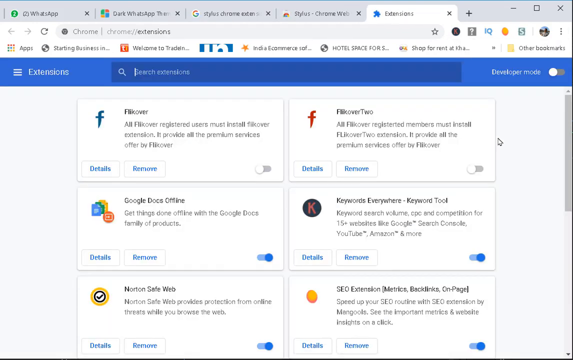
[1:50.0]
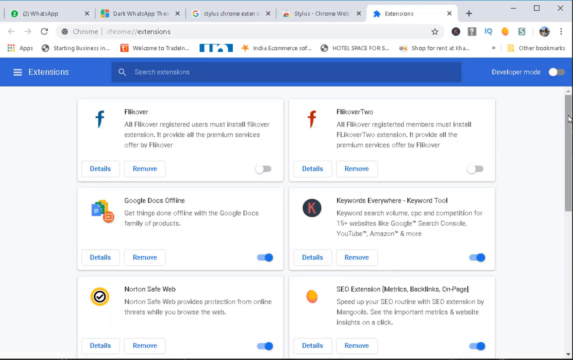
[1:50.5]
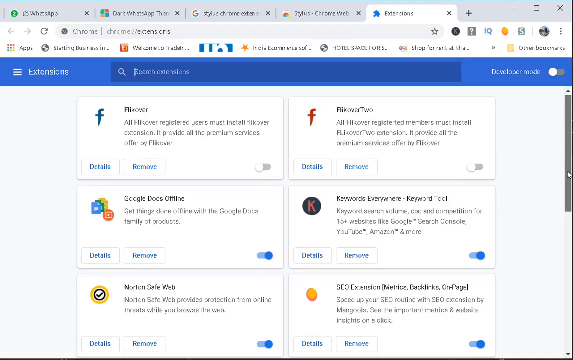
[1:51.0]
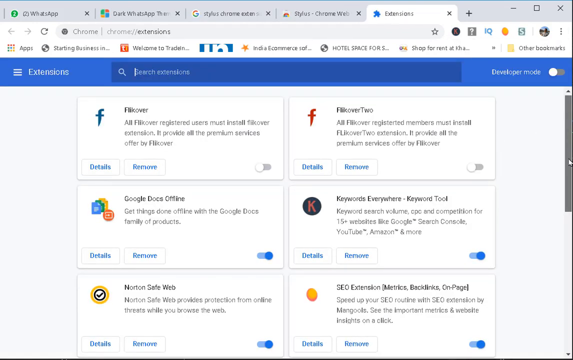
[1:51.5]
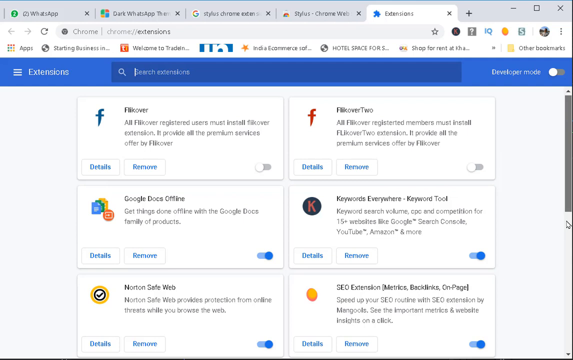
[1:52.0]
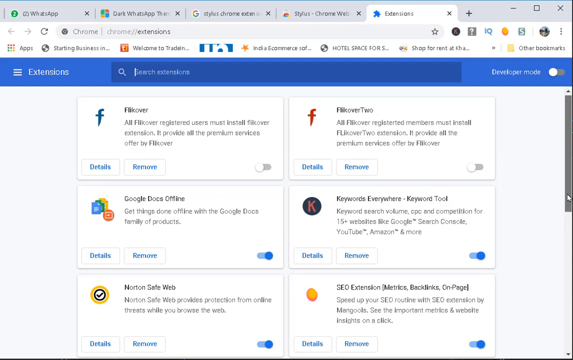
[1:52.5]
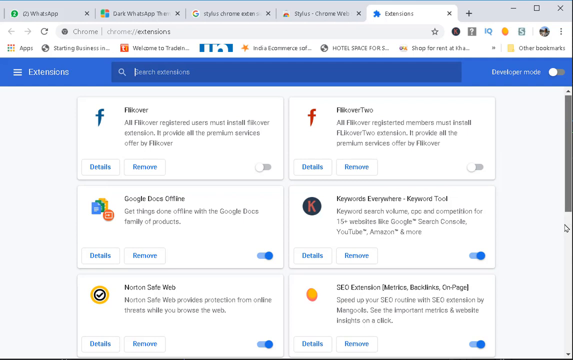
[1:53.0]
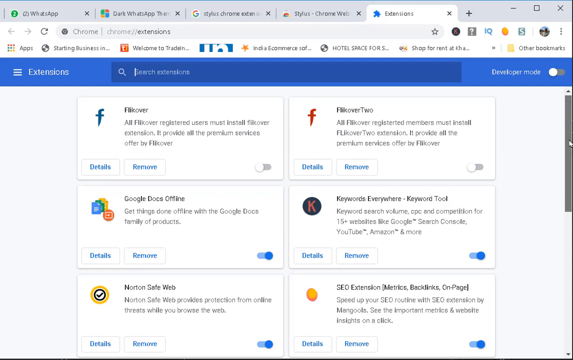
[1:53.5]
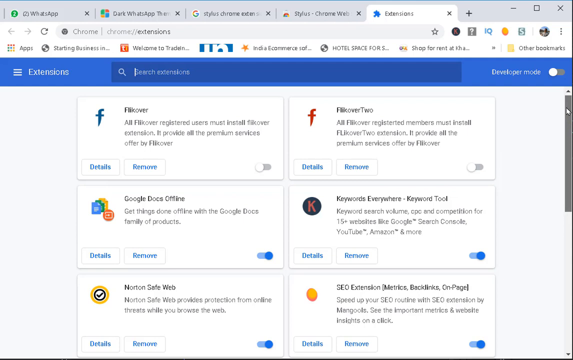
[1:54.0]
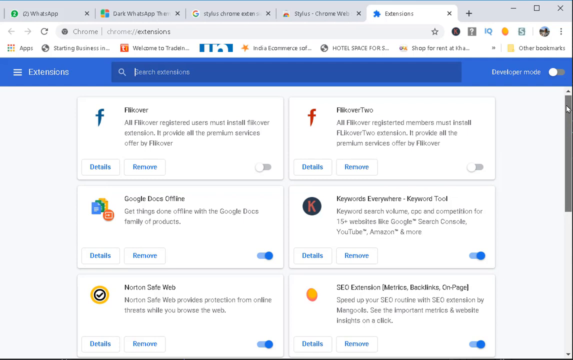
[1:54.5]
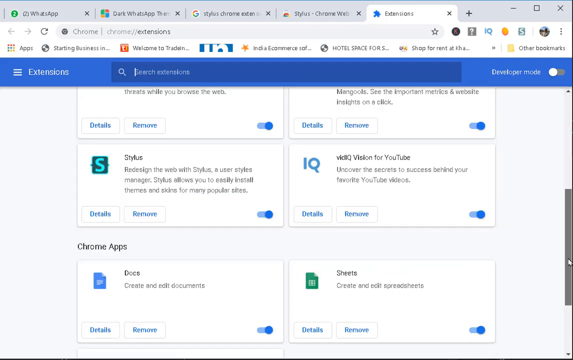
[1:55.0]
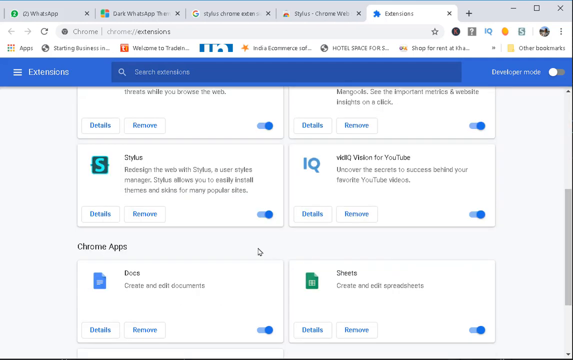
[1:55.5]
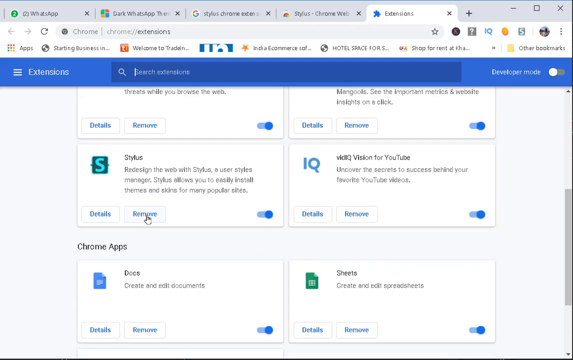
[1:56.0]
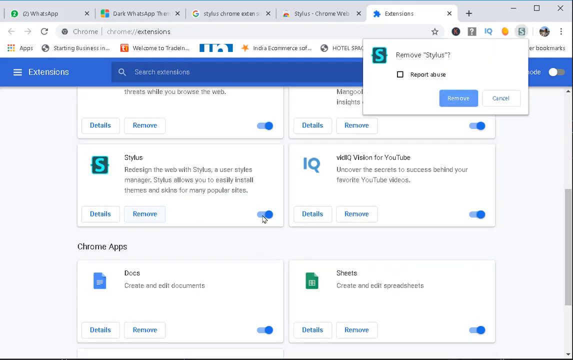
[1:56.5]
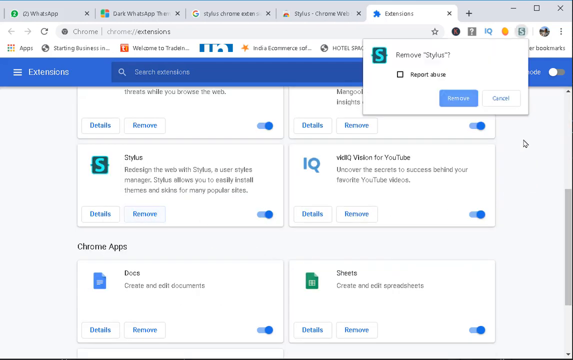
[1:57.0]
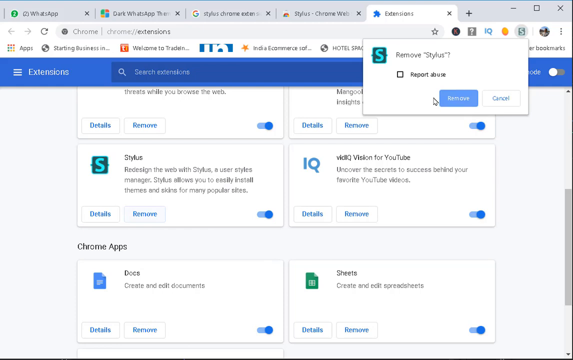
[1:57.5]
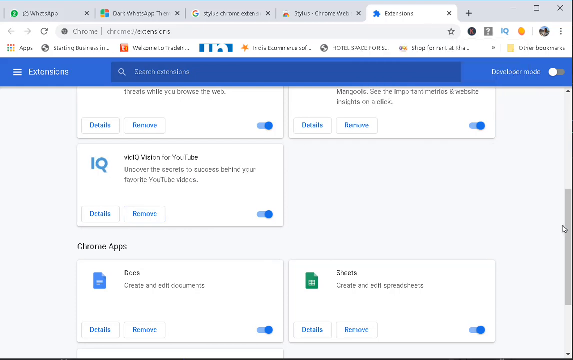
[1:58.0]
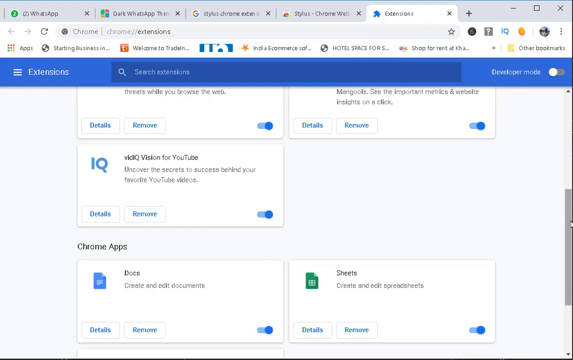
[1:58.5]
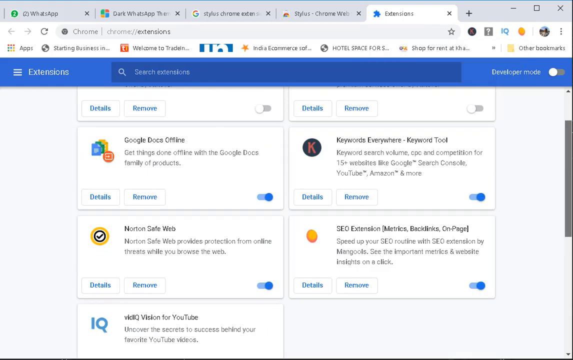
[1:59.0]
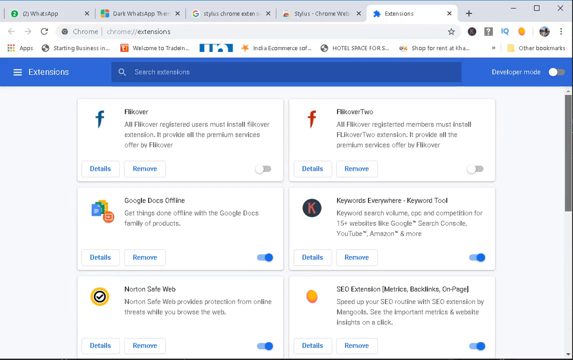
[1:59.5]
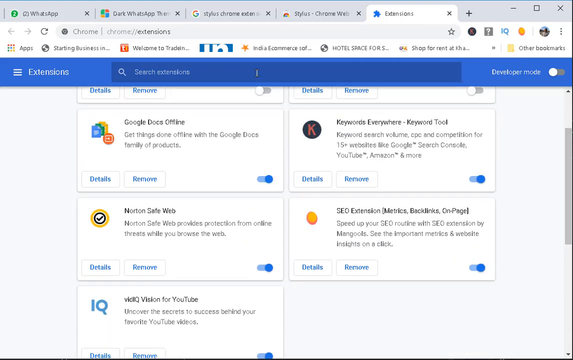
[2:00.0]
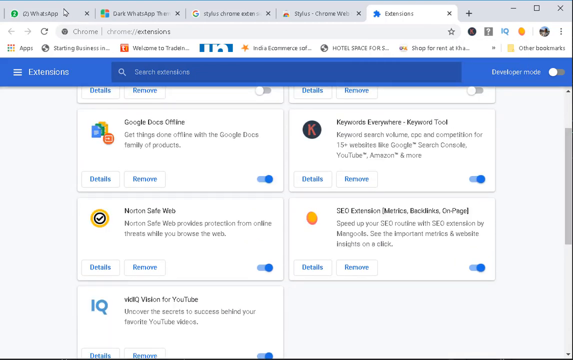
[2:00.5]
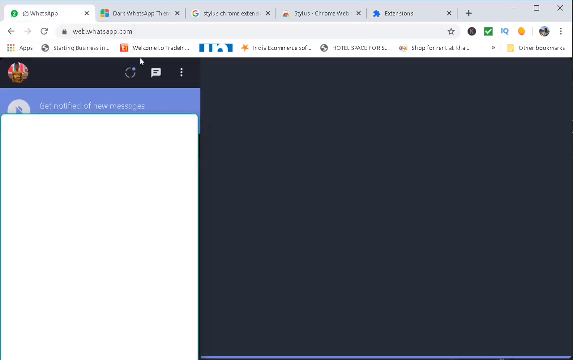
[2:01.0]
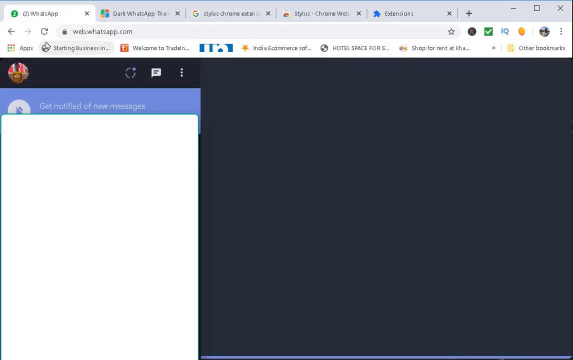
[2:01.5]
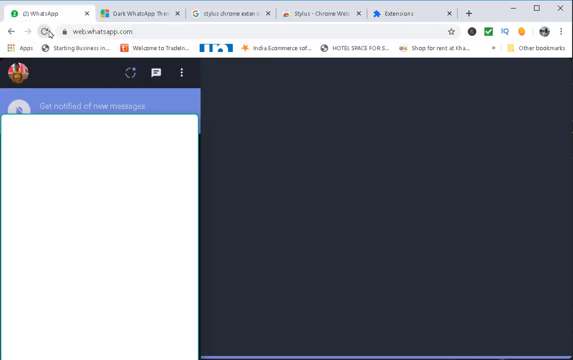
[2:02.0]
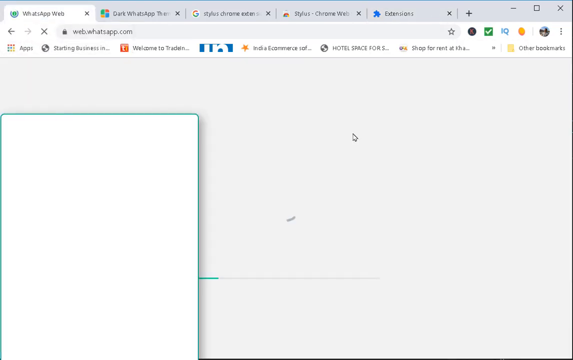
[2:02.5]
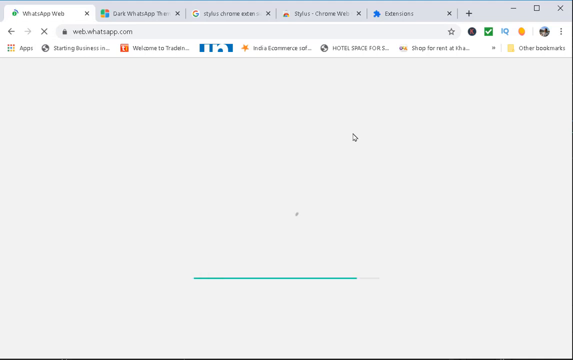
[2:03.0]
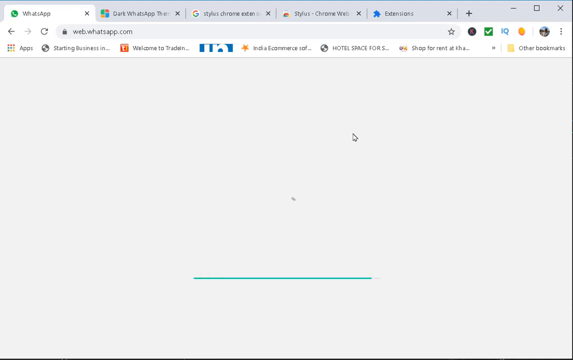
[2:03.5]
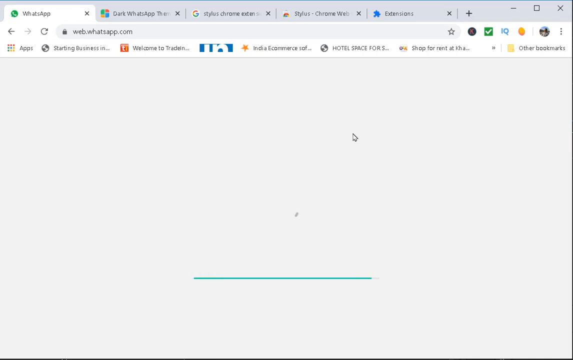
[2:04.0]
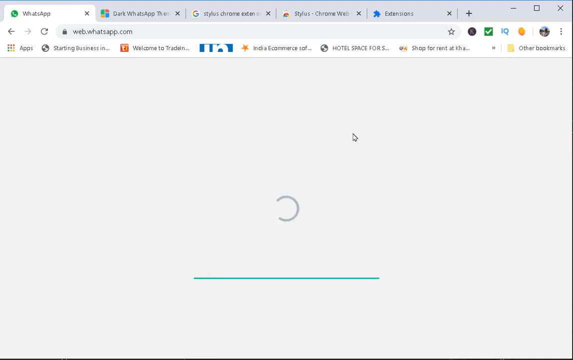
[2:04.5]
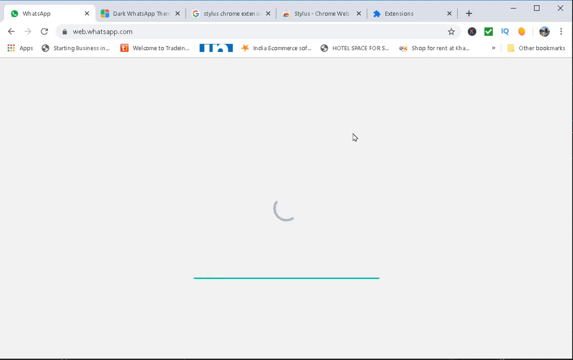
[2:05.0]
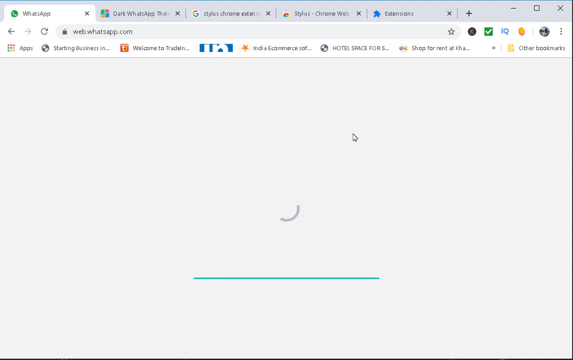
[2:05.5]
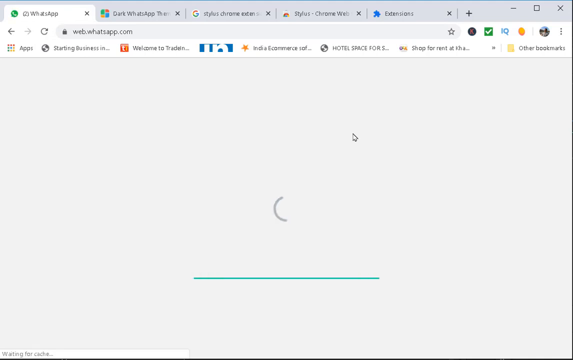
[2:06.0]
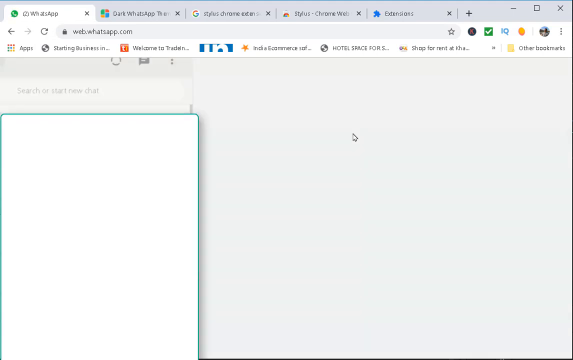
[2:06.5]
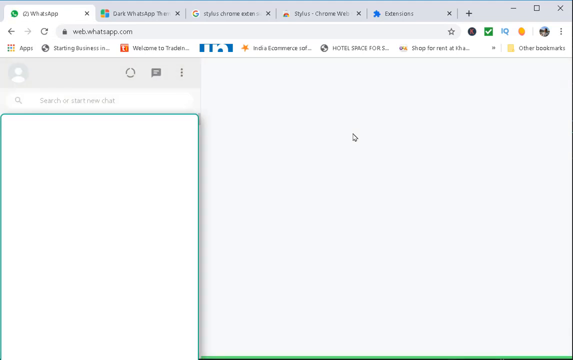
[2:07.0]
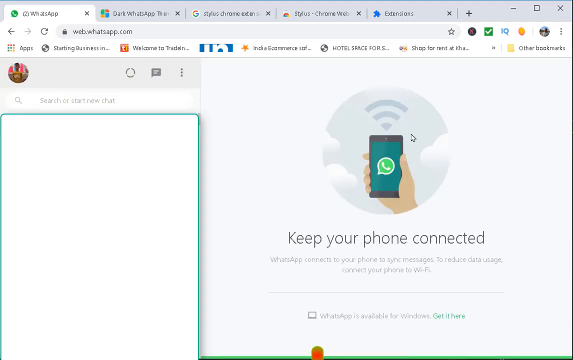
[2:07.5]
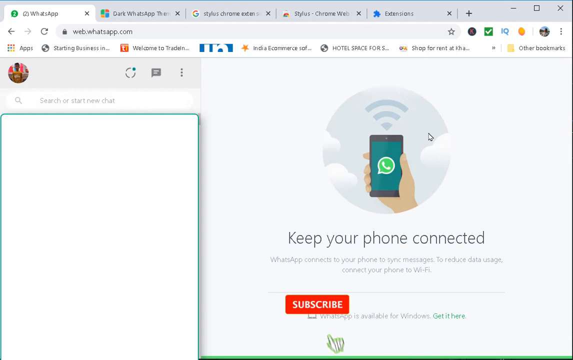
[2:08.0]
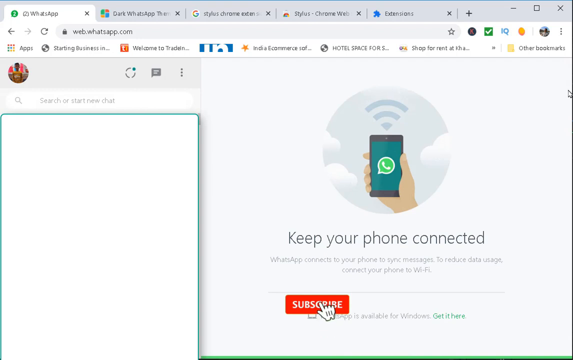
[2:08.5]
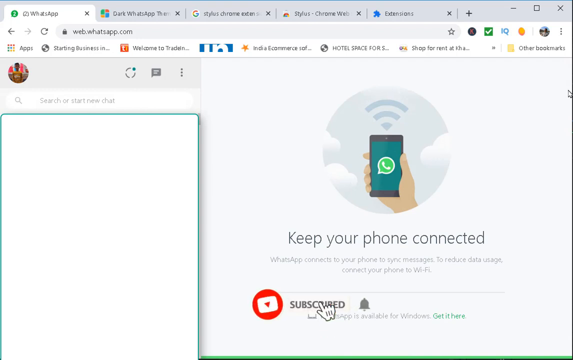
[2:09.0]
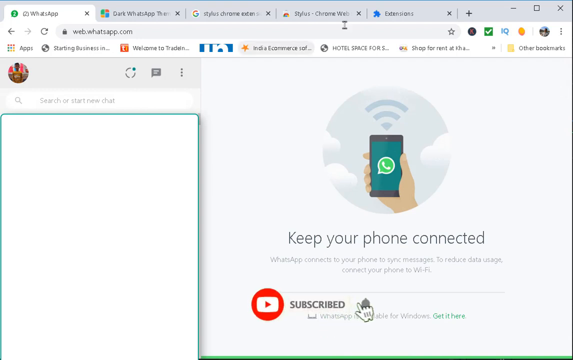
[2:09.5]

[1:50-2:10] Through the options and tools menu, the Stylus extension is opened and removed. The WhatsApp browser page is then refreshed, returning to the original WhatsApp page without the Stylus themes.